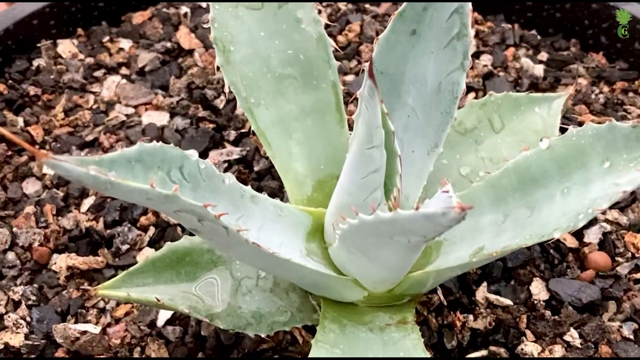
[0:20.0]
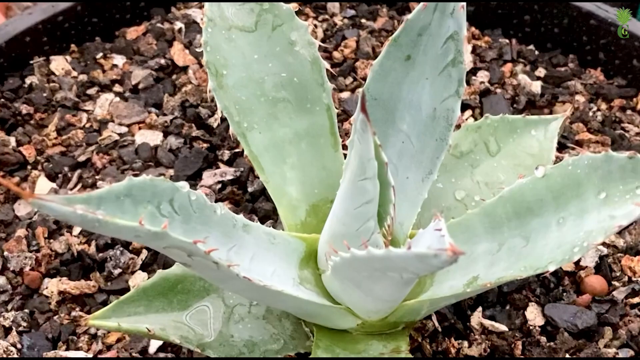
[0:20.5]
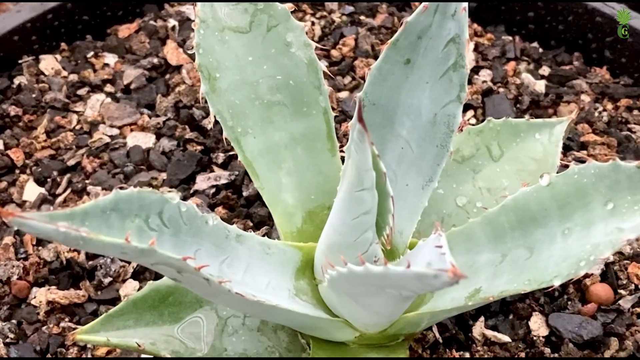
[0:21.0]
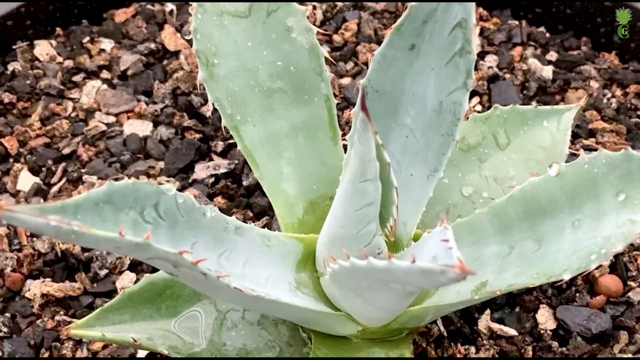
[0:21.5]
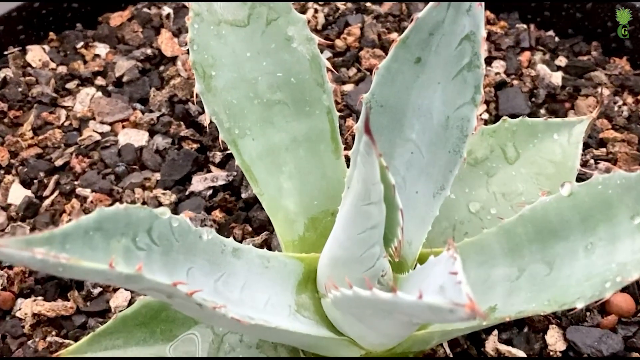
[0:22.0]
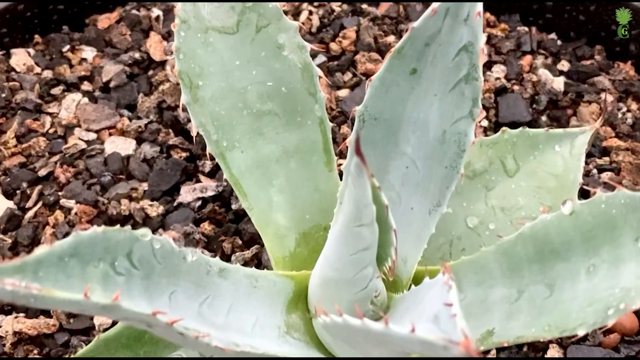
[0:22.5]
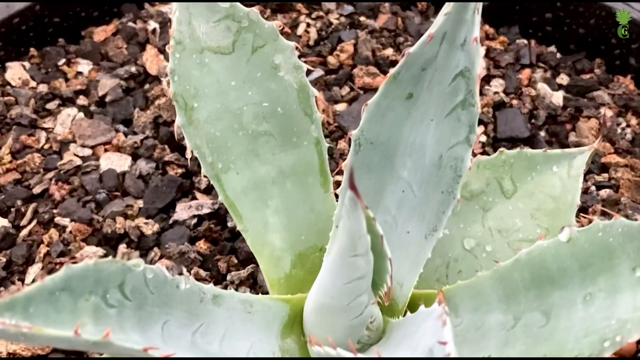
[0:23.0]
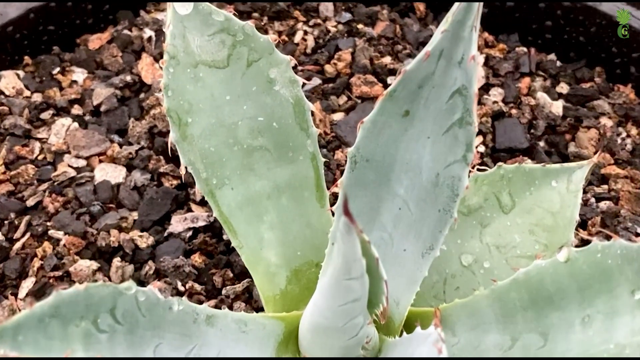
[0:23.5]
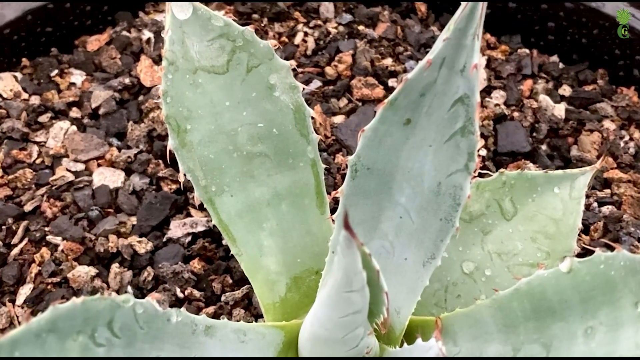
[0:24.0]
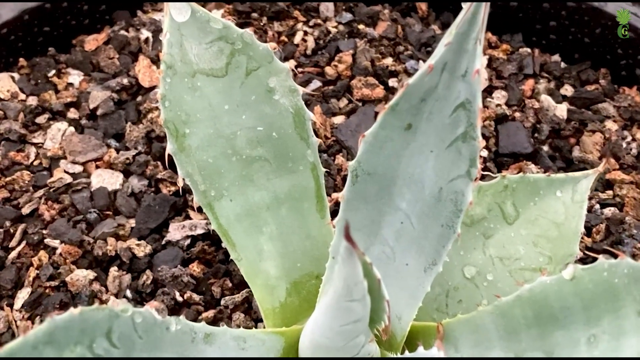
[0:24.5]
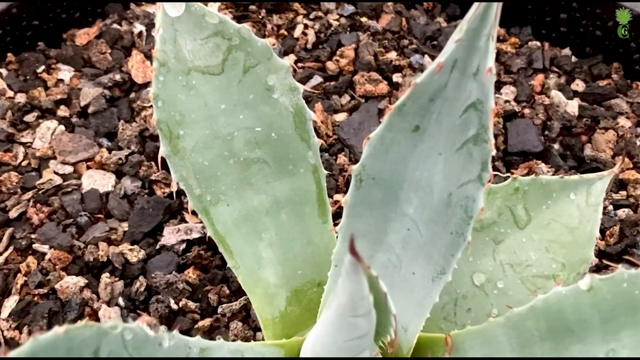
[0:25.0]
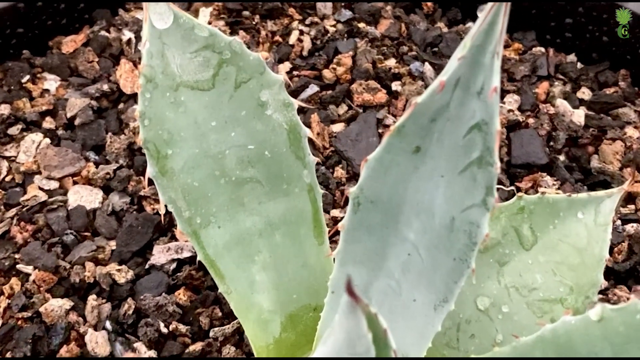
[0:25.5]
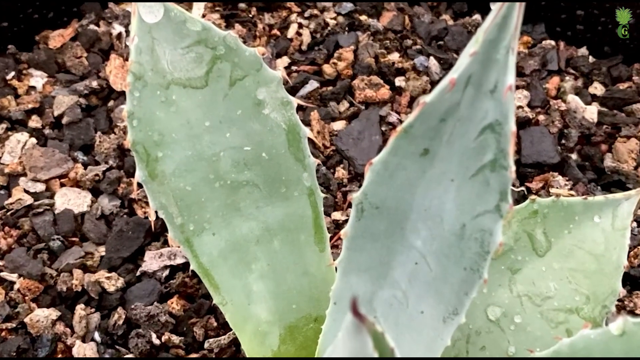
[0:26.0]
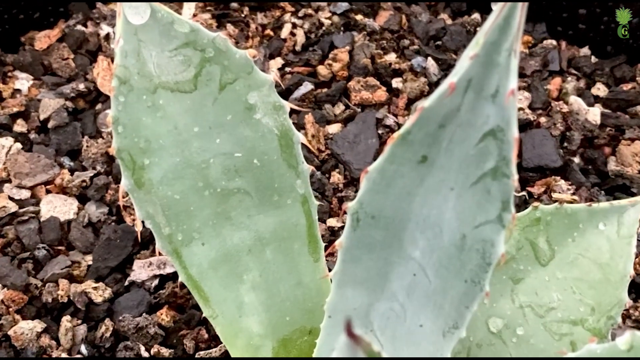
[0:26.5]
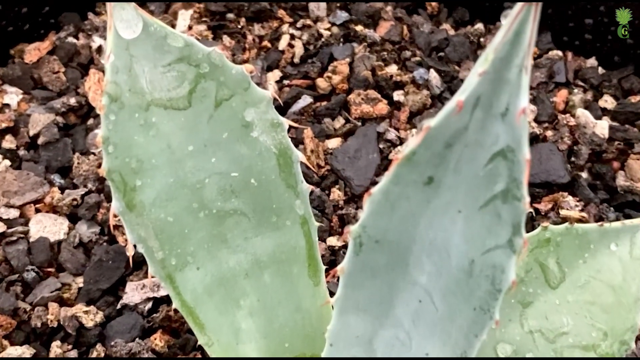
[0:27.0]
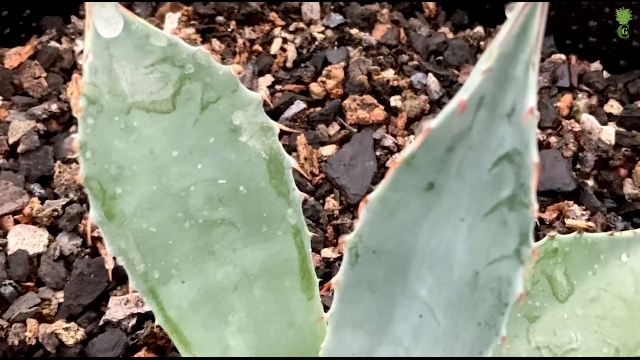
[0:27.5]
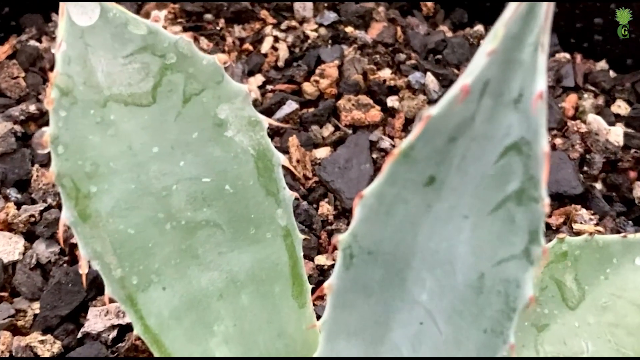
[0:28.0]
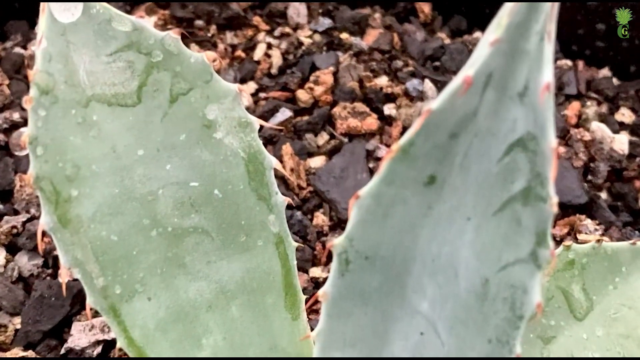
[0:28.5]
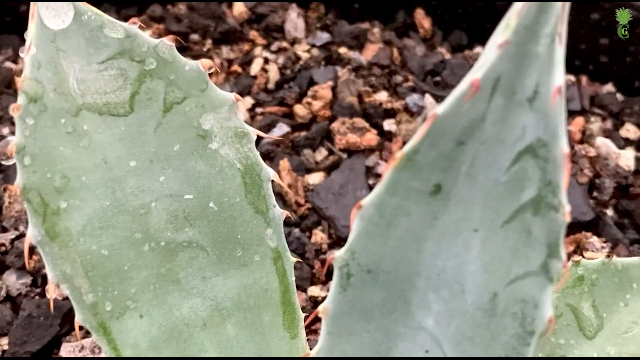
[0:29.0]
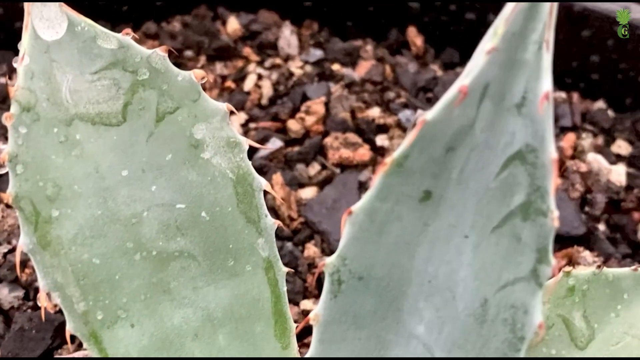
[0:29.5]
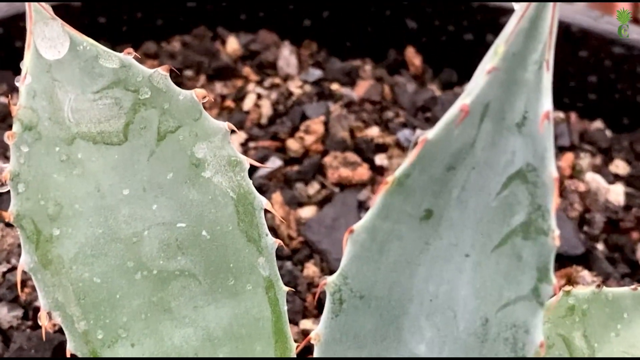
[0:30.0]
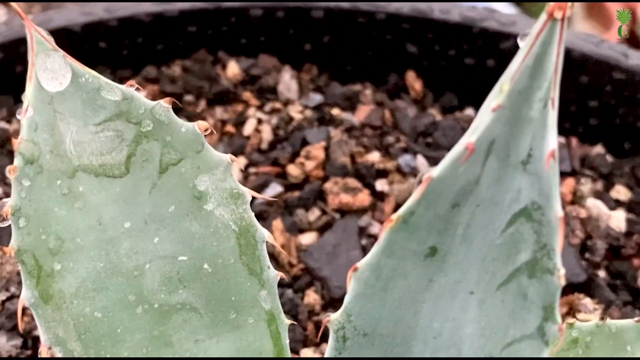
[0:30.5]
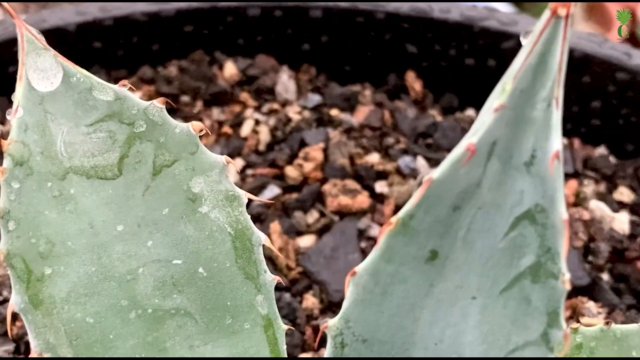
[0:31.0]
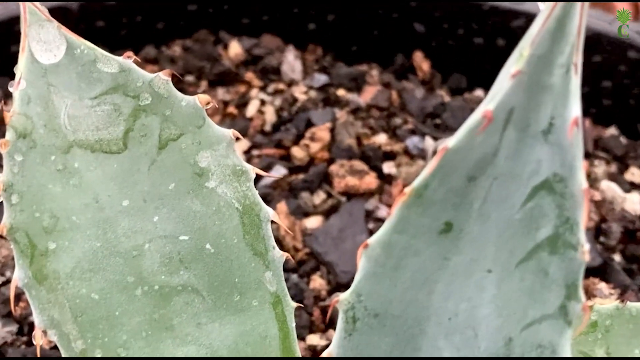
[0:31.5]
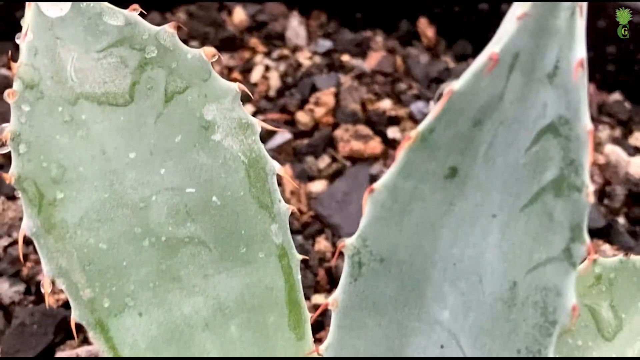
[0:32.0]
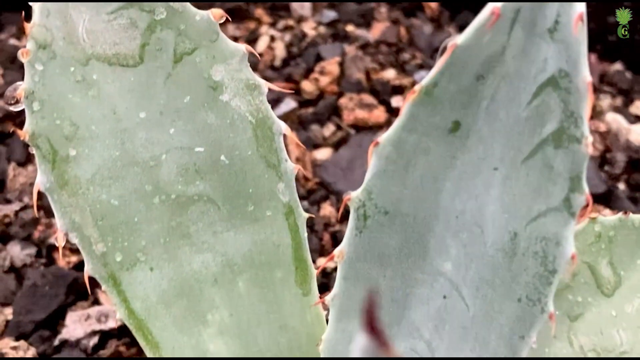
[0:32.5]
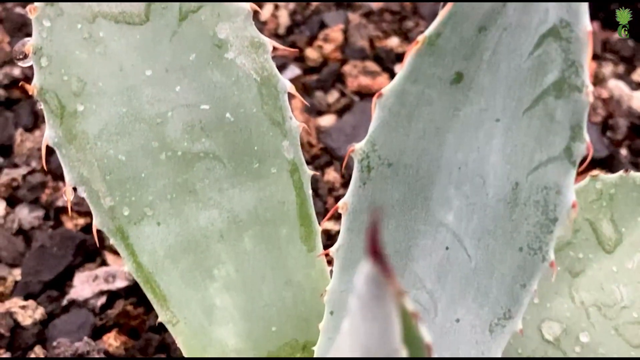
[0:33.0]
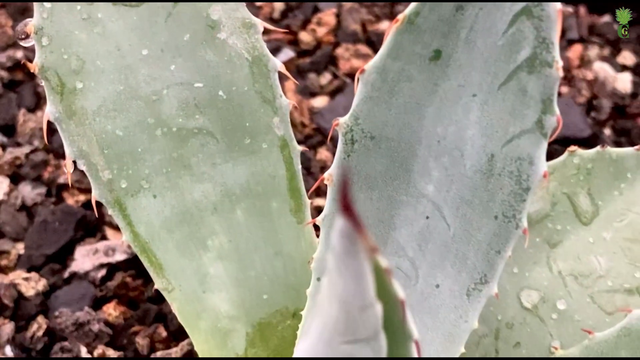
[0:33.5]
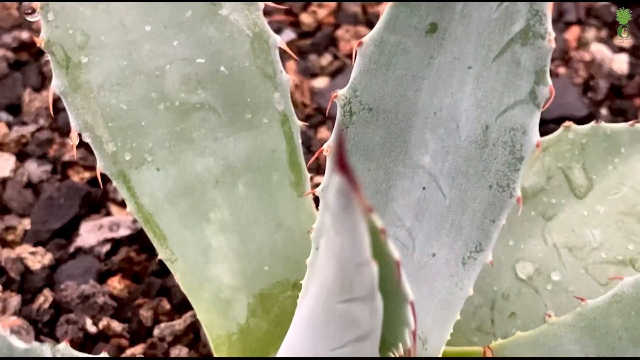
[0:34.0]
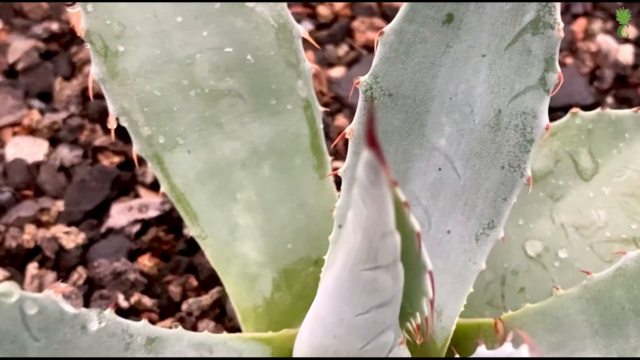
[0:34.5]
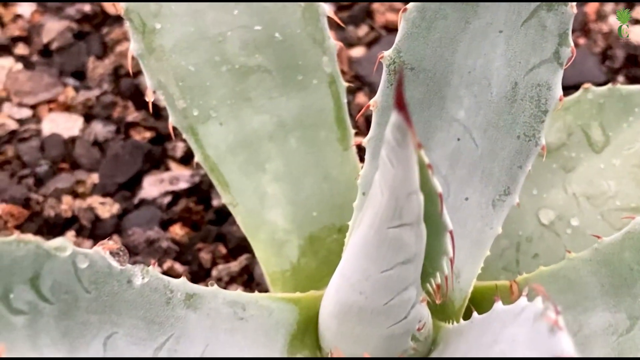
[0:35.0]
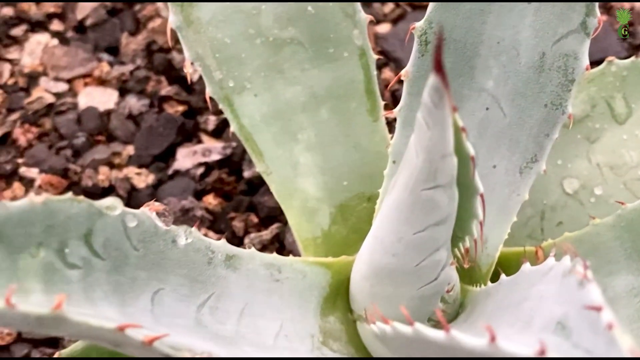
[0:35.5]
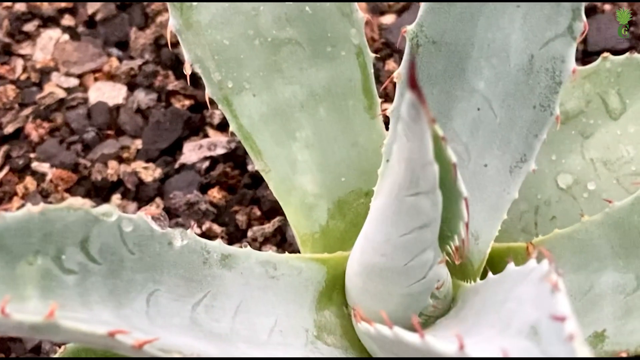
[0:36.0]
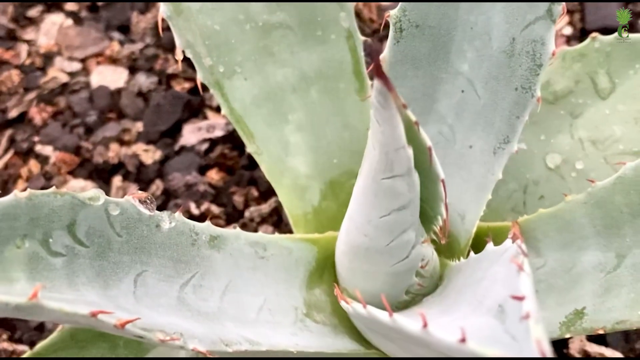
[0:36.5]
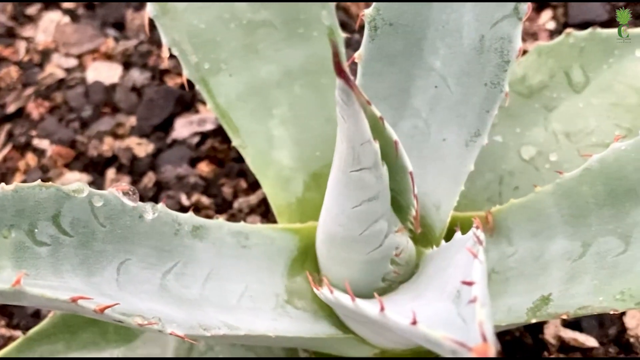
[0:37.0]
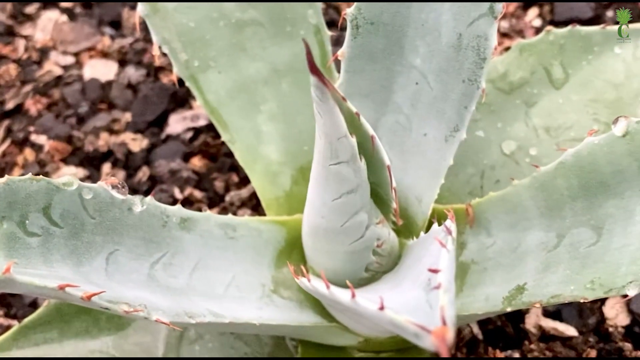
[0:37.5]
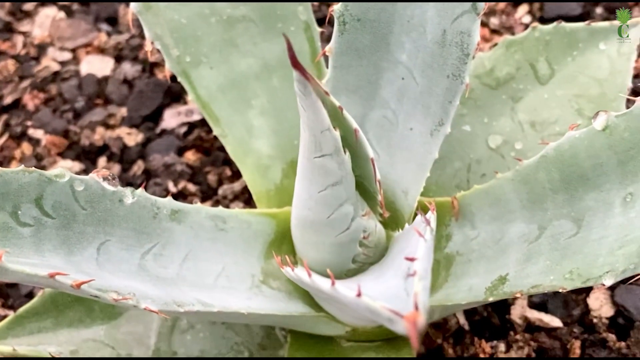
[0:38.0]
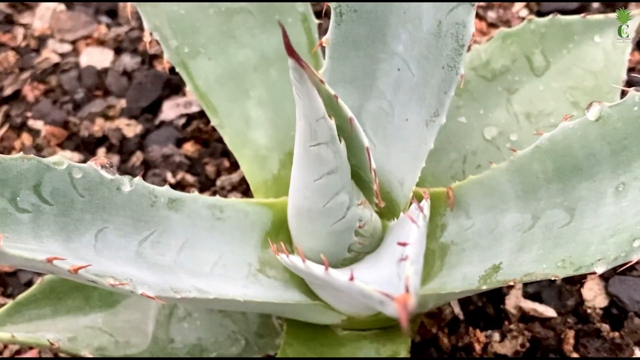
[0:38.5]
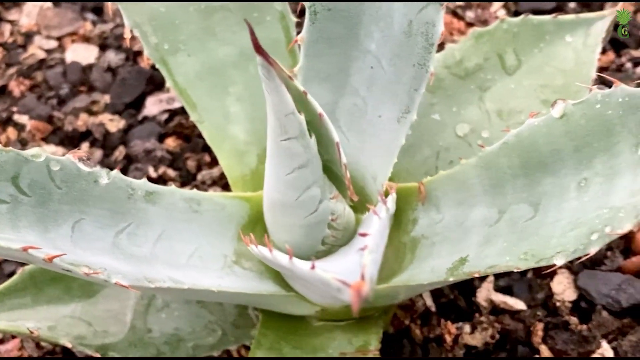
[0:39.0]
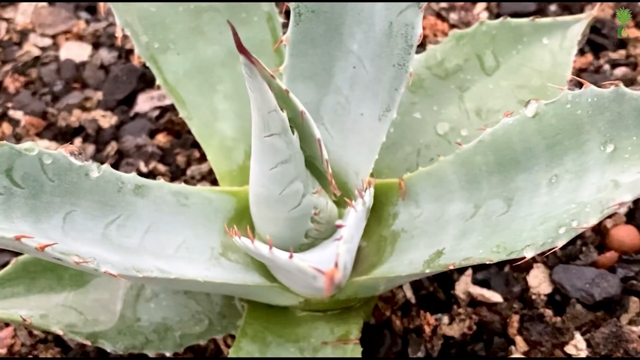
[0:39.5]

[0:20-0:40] The camera zooms in on the succulent in the pot. Up close, the plant's colouring is a sort of sage green. The leaves are thick, long and rather sturdy. New leaves sprout from the central point, all curled up, and slowly unfurl. Each leaf edge has very sharp thorns, and the end of each leaf has a very sharp point, like a spear spike. The leaves are curved, almost like a funnel shape.